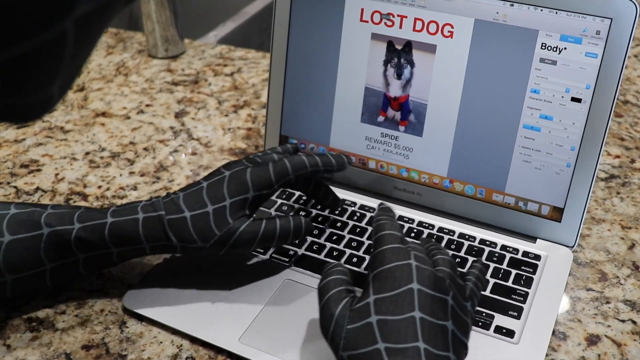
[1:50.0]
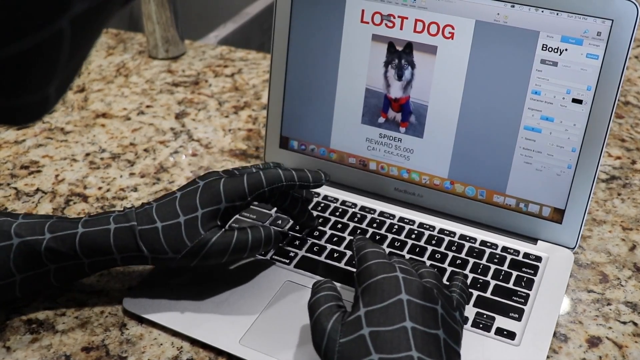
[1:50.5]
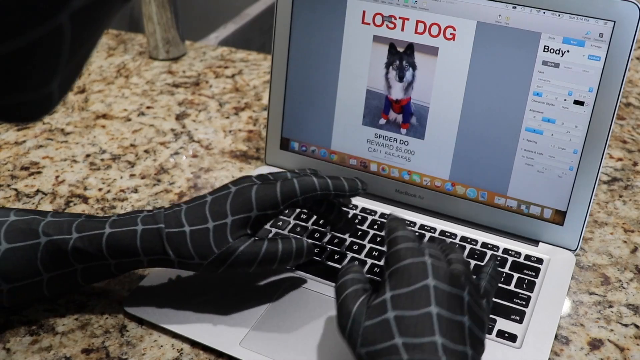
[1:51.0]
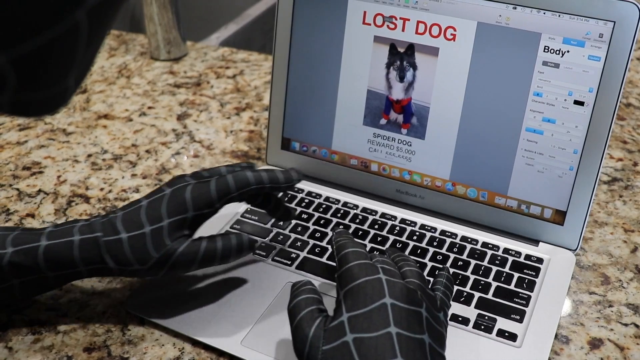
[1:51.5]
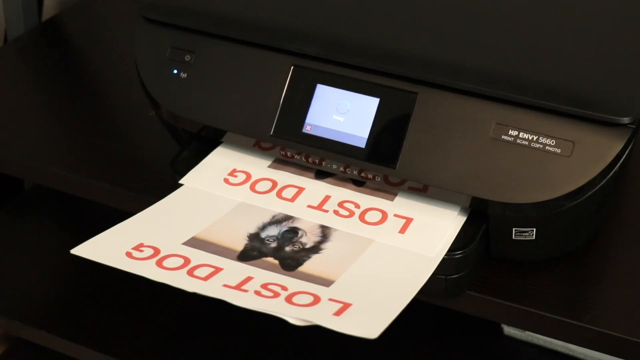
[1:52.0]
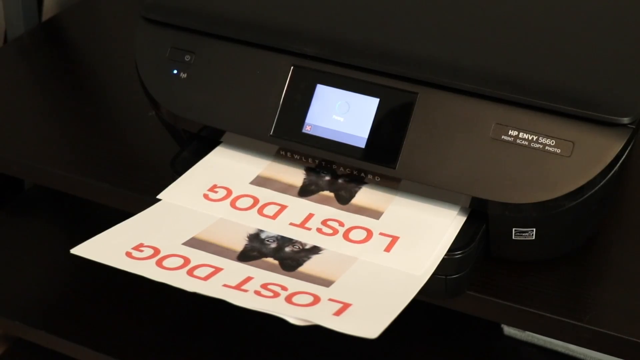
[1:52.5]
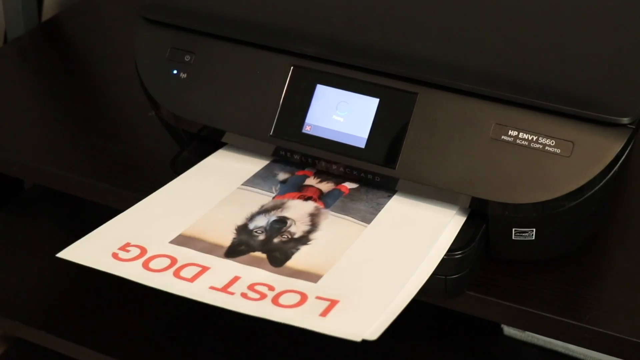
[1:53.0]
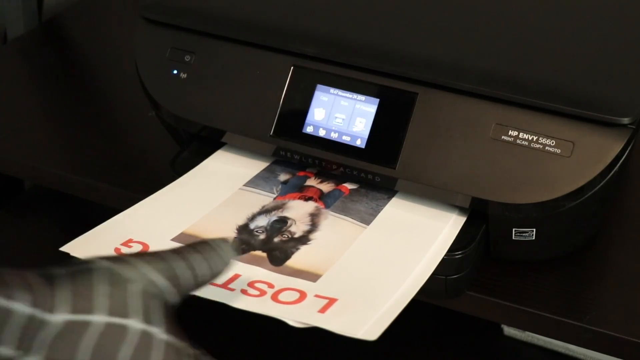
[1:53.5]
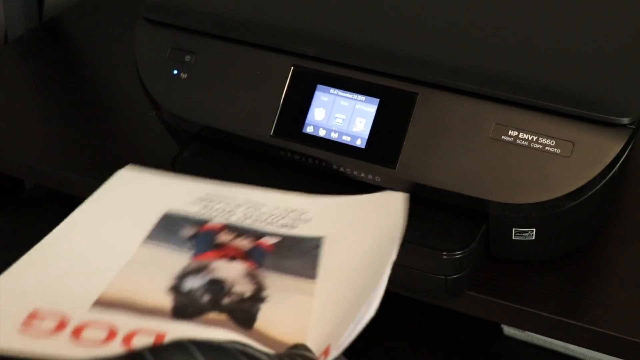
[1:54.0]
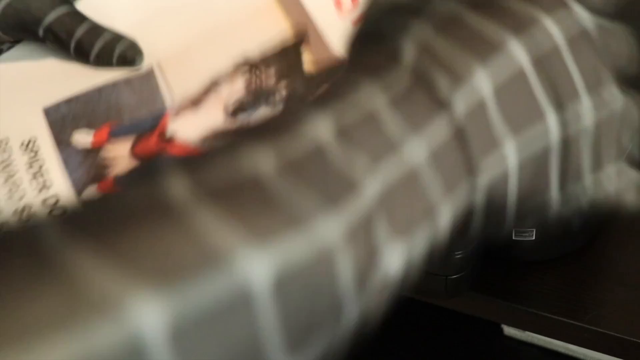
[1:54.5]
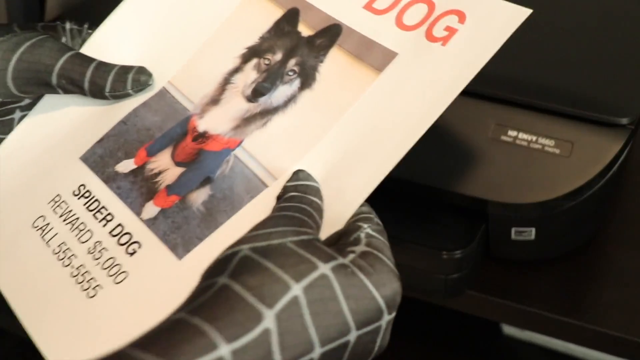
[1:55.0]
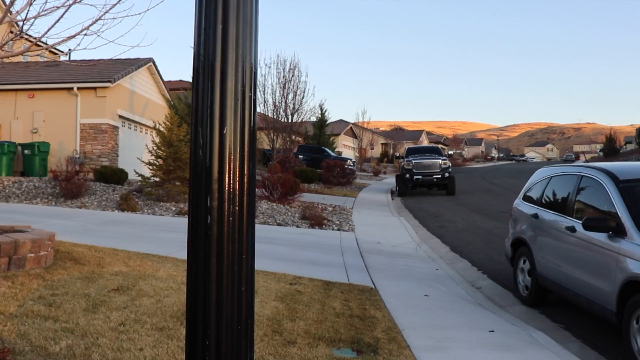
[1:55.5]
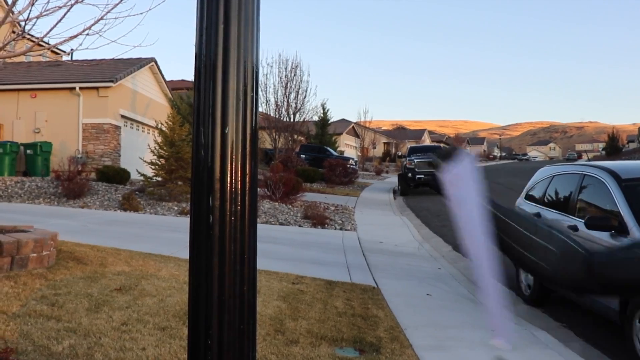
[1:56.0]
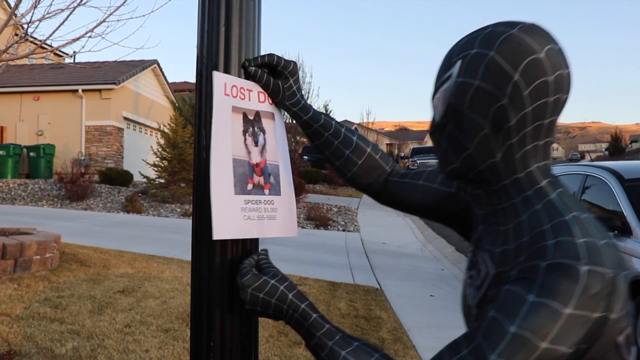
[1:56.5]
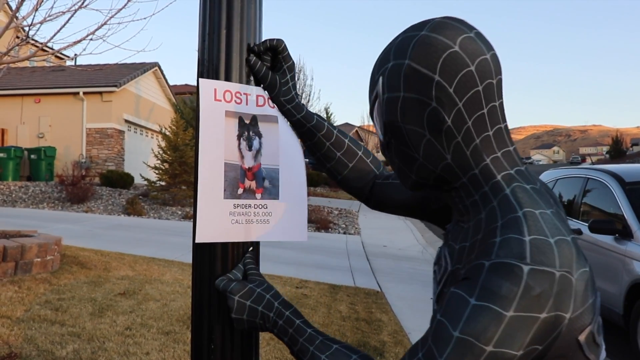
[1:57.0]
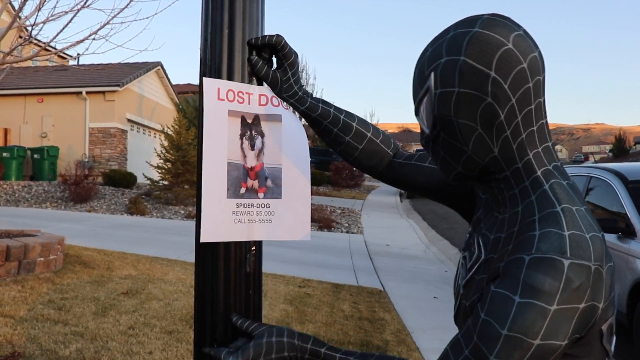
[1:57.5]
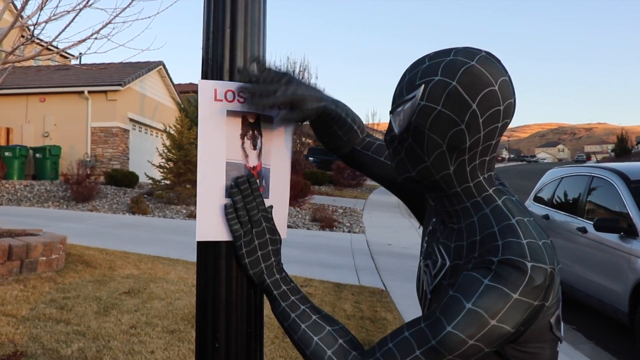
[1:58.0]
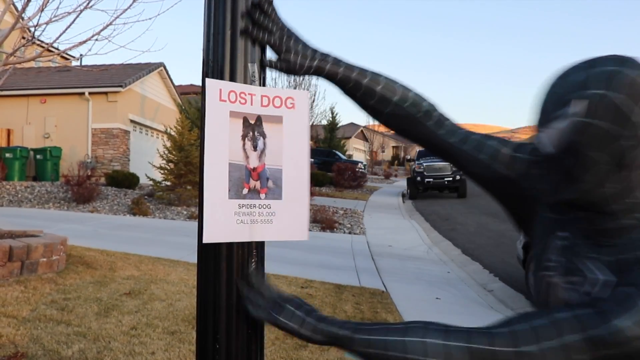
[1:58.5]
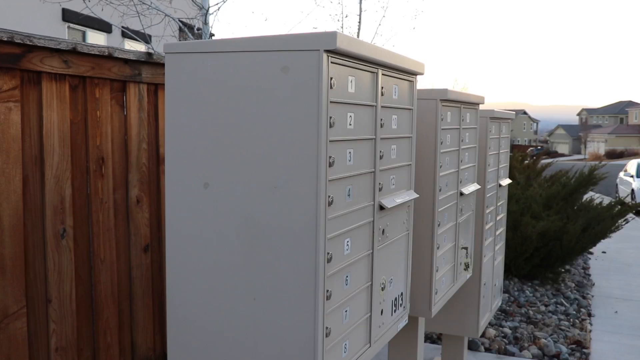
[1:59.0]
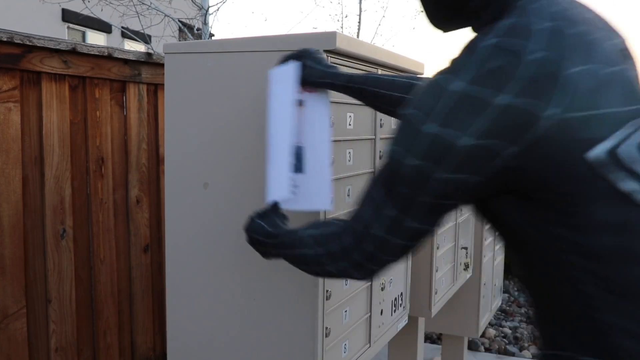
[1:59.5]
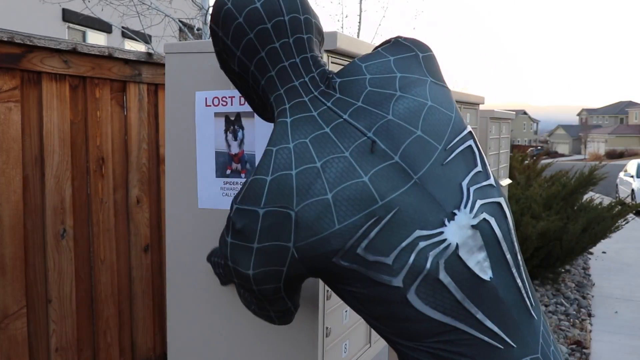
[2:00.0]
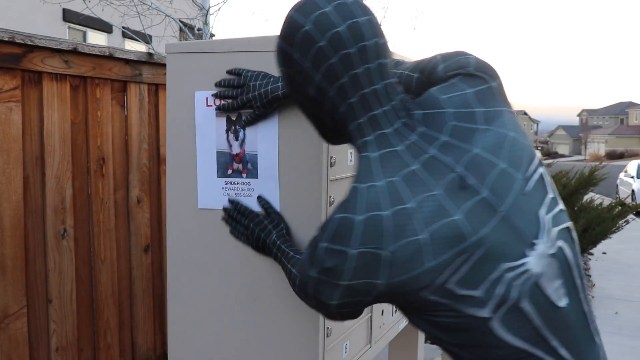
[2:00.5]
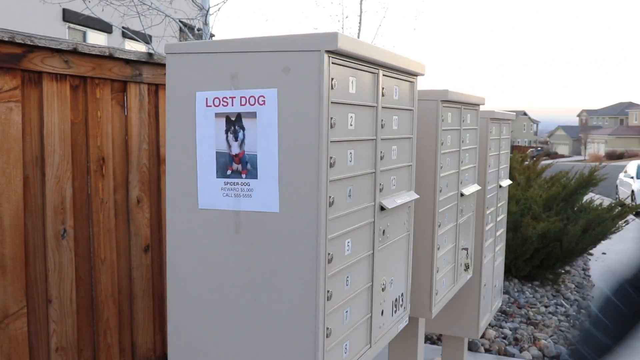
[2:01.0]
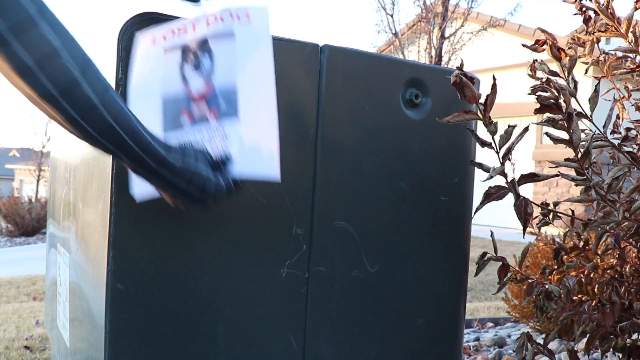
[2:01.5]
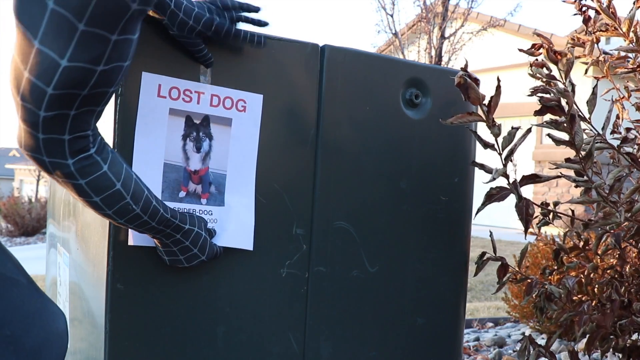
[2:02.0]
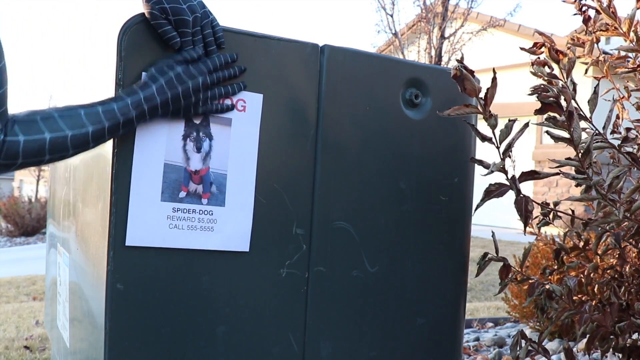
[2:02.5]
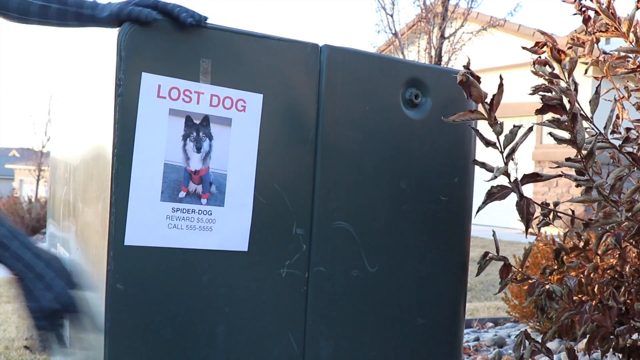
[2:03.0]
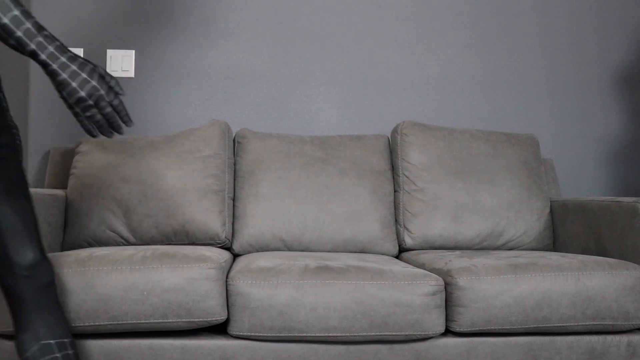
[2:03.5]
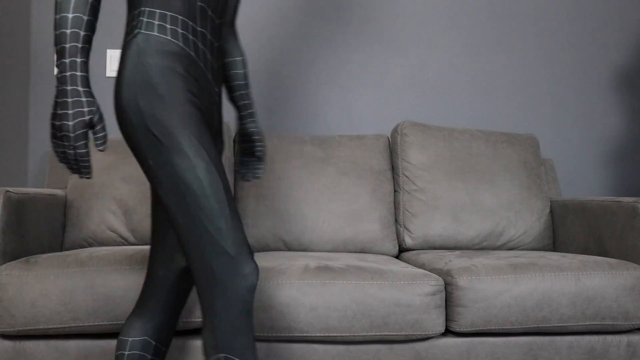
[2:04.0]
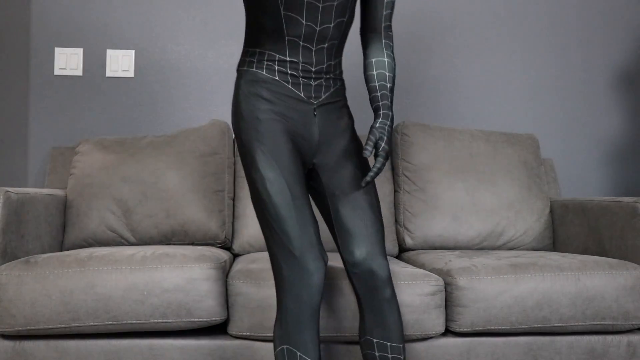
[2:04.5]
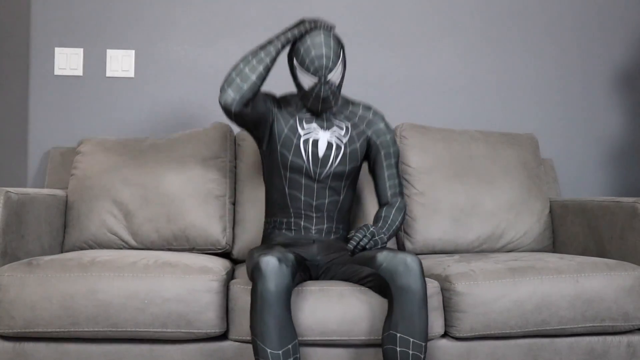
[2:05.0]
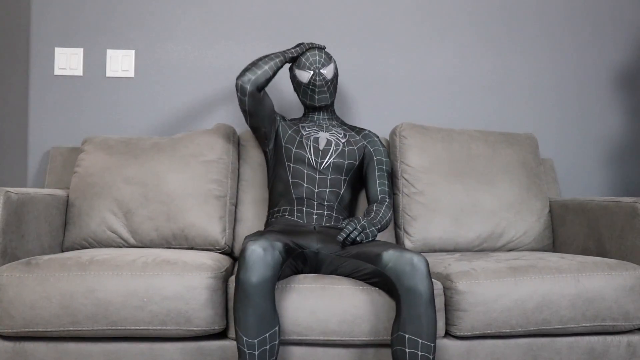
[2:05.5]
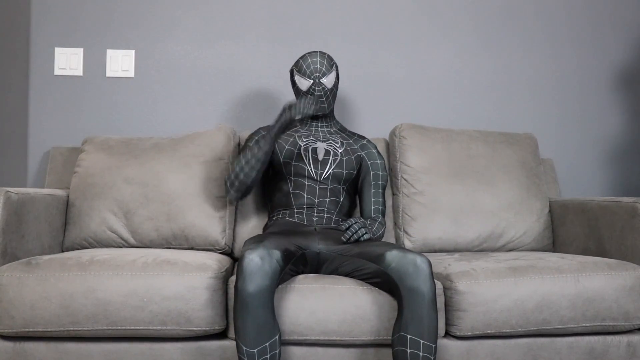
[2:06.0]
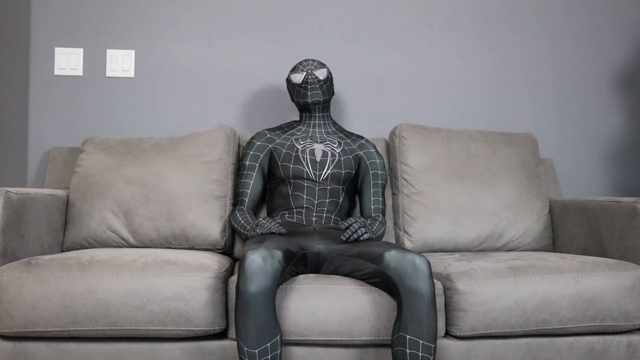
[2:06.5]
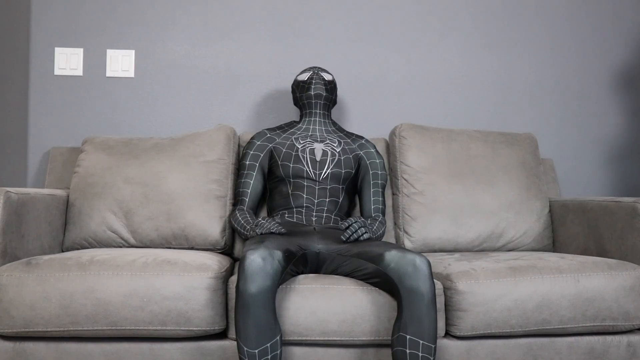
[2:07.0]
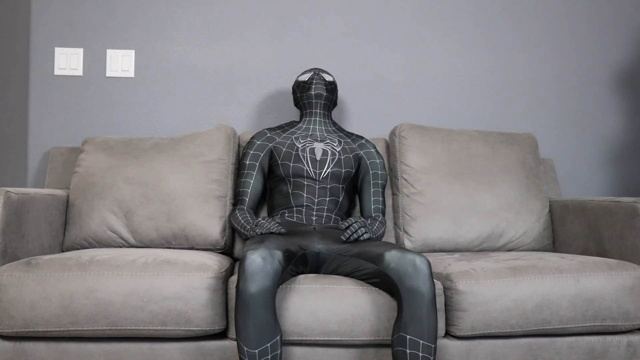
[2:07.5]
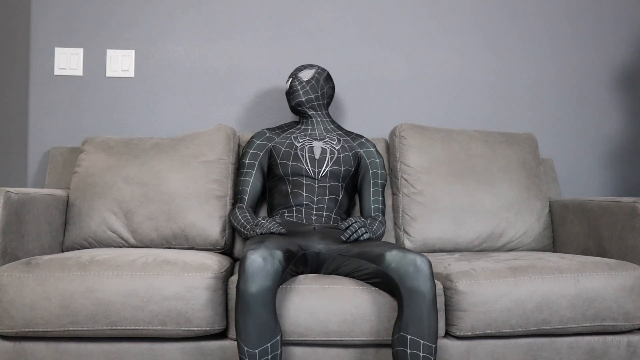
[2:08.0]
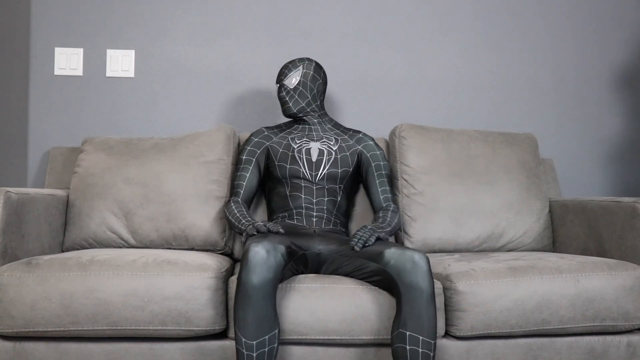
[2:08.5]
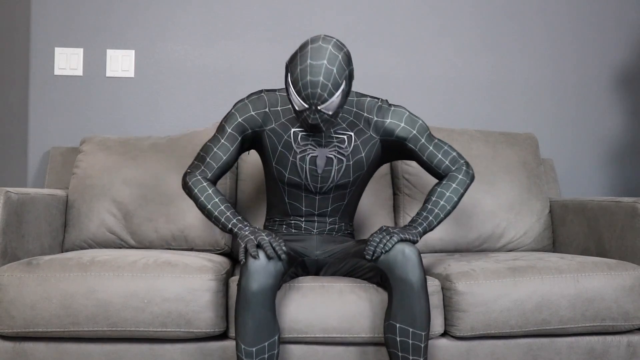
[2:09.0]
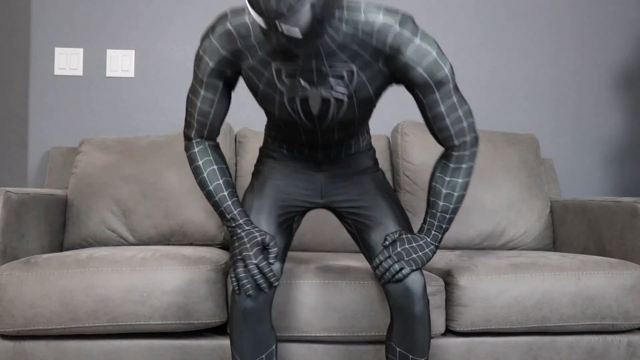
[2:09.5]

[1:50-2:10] Also titled "The Life of Spider Dog," the video shows Spider-Man making color flyers of his lost dog wearing the Spider-Dog outfit. He prints out the flyers and goes all over town hanging them on walls, posts, mailboxes, and power boxes in his neighborhood. Back home in his black Spider-Man costume, he sits briefly on a tan couch in front of a gray wall, looking a bit forlorn; he kind of lies back into the couch and sighs, puts his hand on his head, and tilts his neck backwards as if in dismay. He then gets up from the couch.